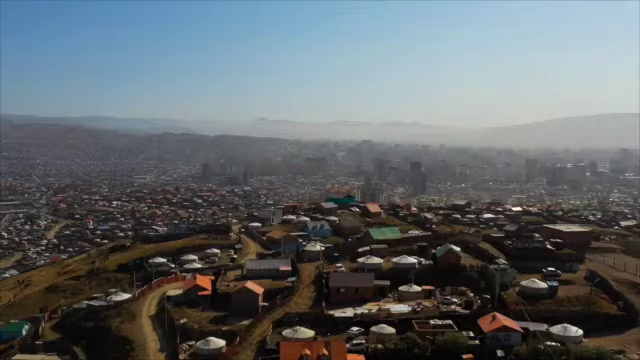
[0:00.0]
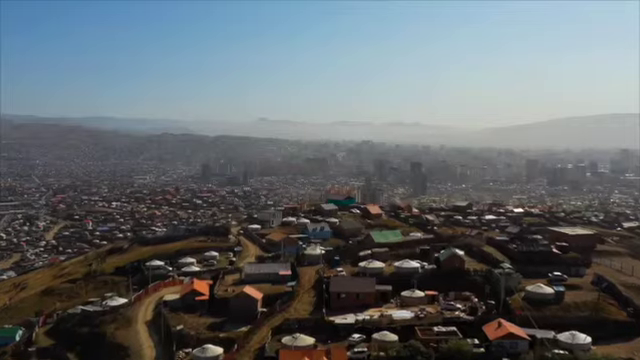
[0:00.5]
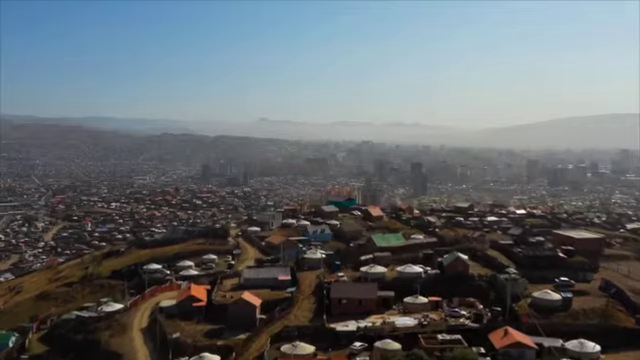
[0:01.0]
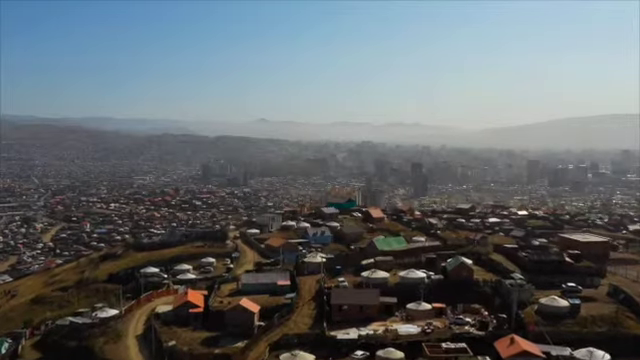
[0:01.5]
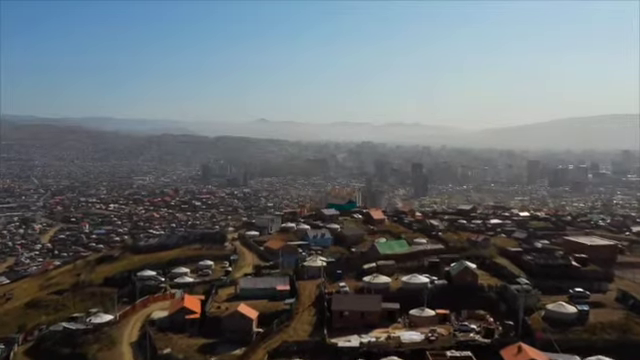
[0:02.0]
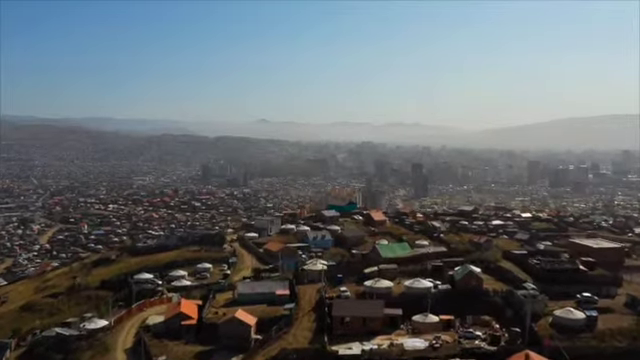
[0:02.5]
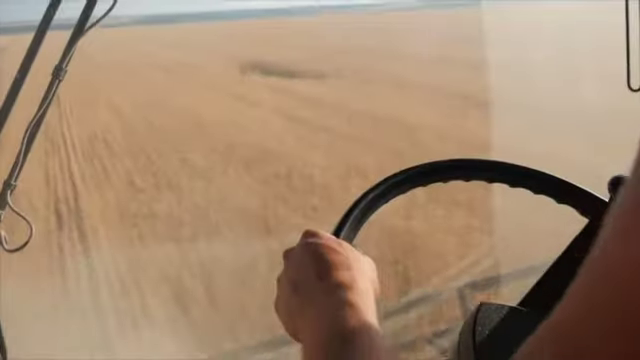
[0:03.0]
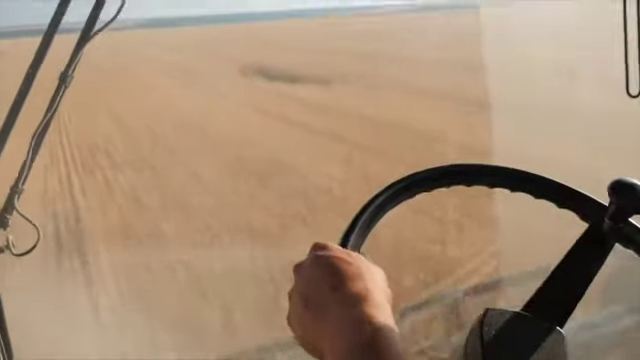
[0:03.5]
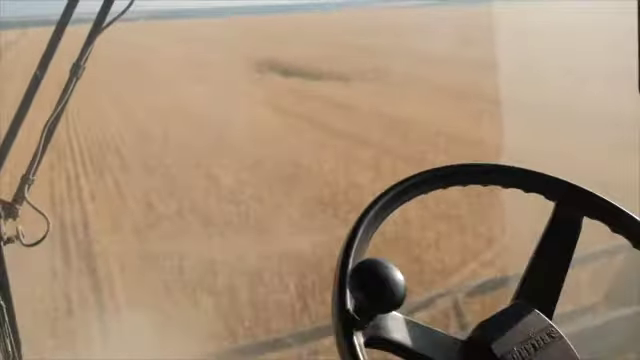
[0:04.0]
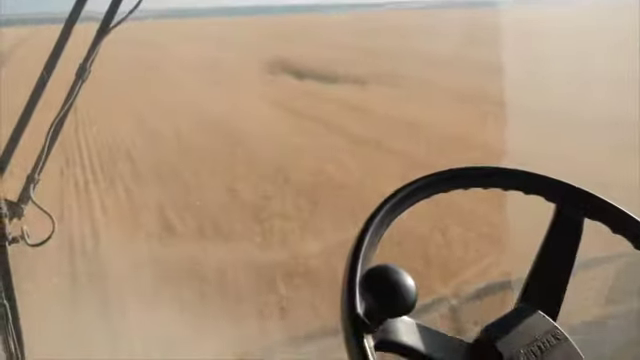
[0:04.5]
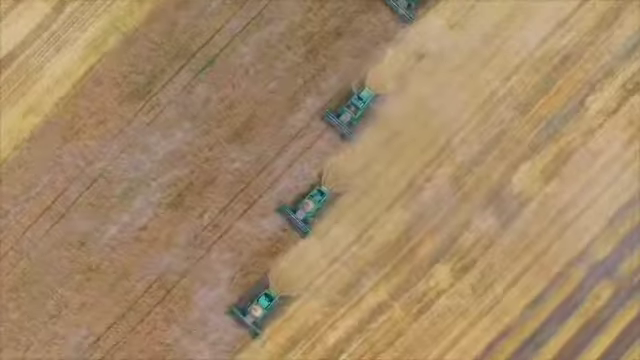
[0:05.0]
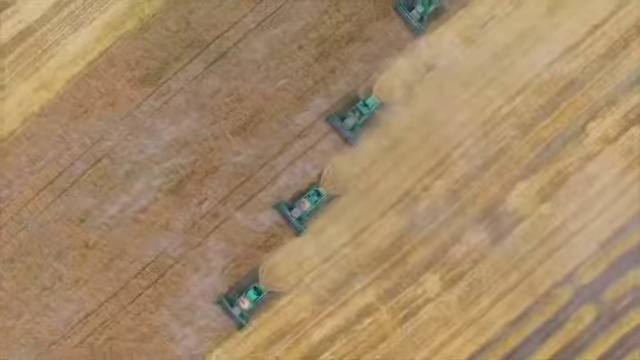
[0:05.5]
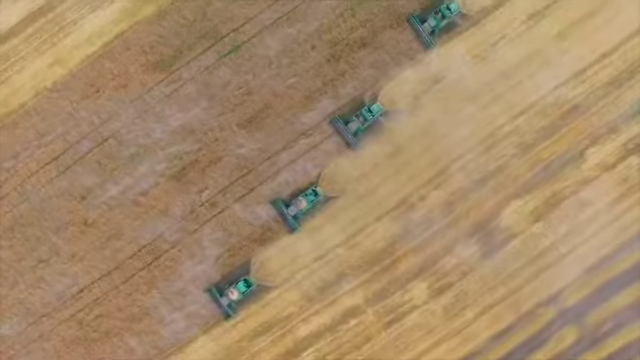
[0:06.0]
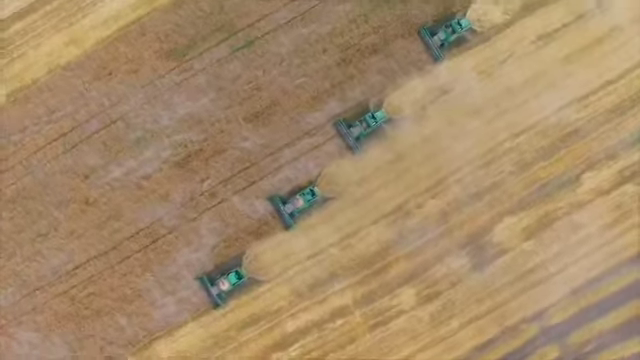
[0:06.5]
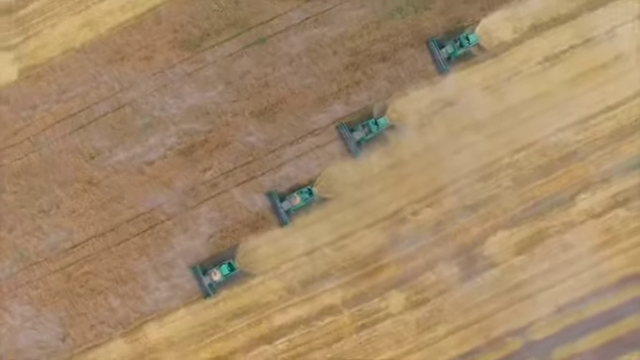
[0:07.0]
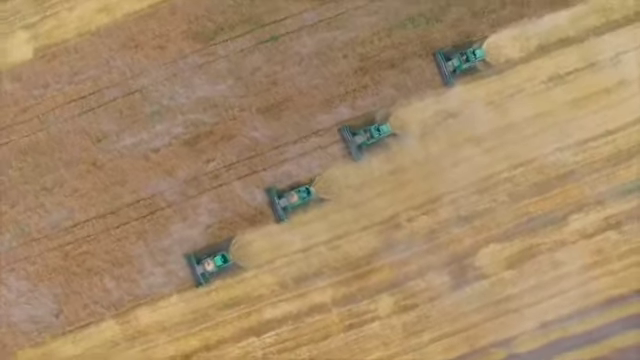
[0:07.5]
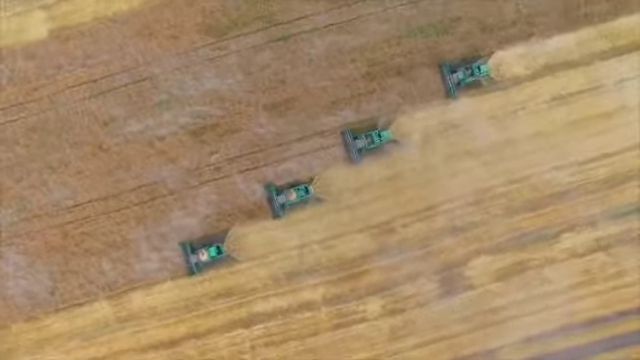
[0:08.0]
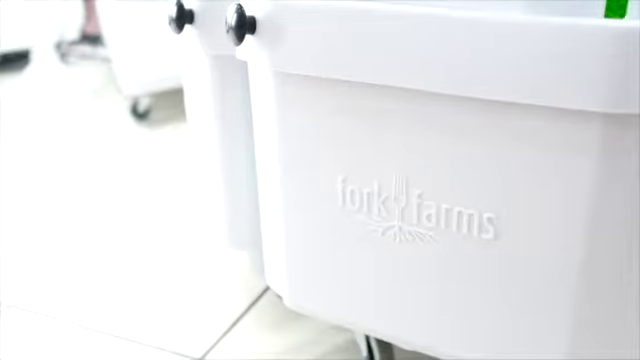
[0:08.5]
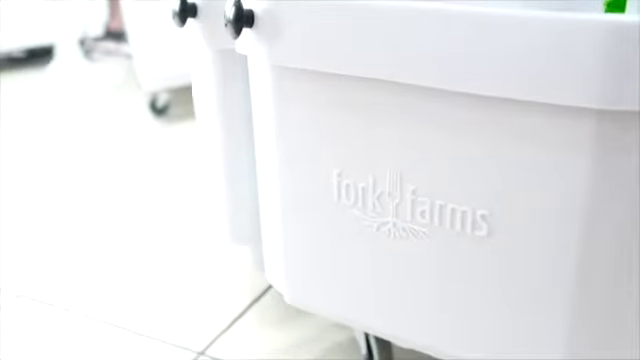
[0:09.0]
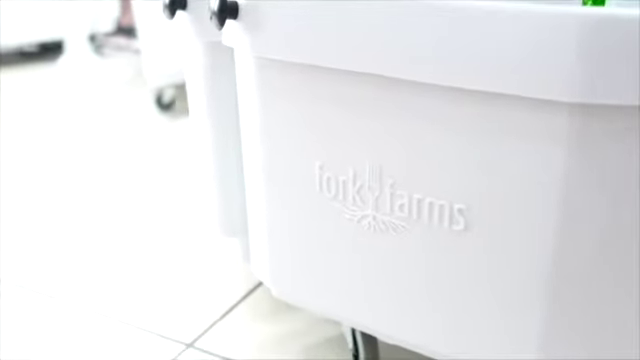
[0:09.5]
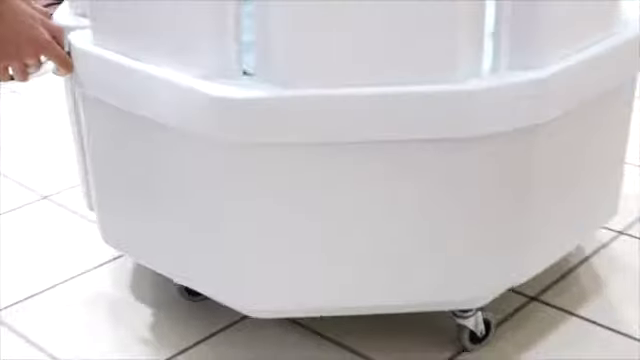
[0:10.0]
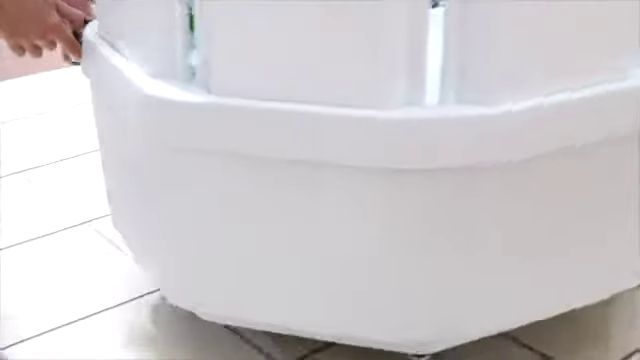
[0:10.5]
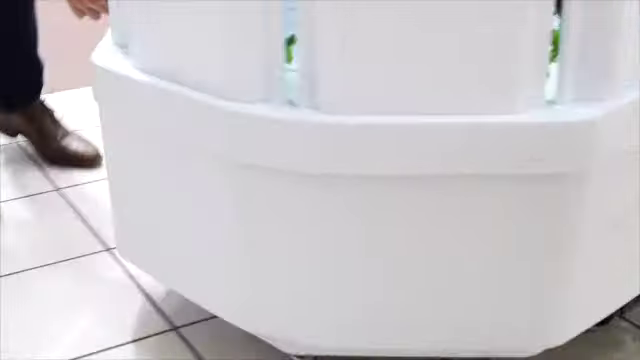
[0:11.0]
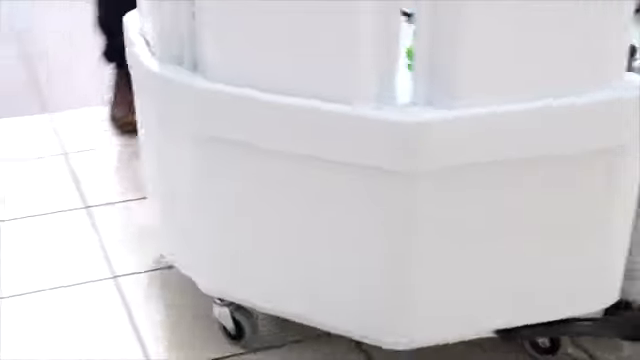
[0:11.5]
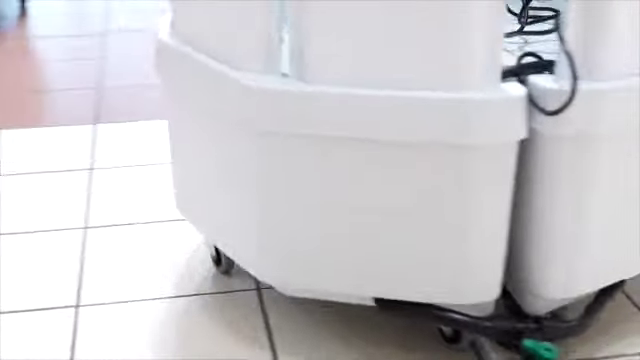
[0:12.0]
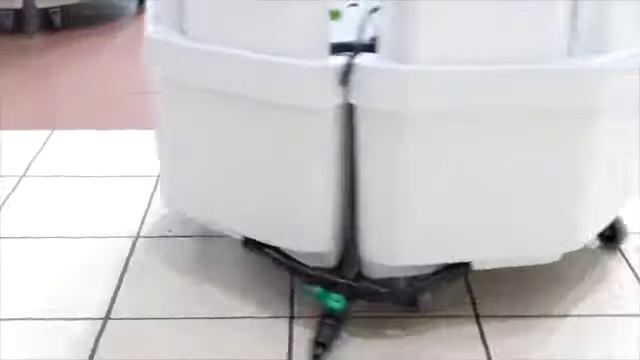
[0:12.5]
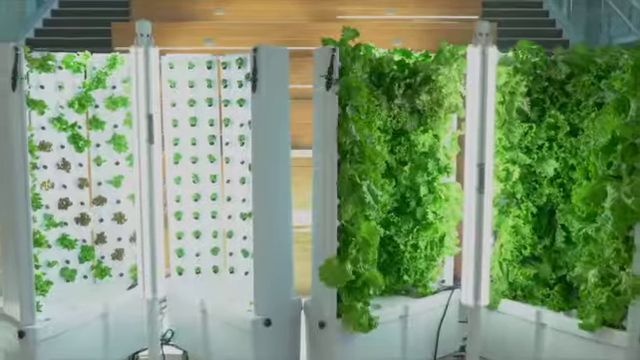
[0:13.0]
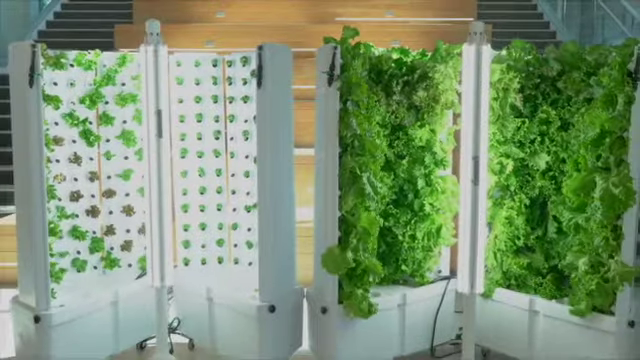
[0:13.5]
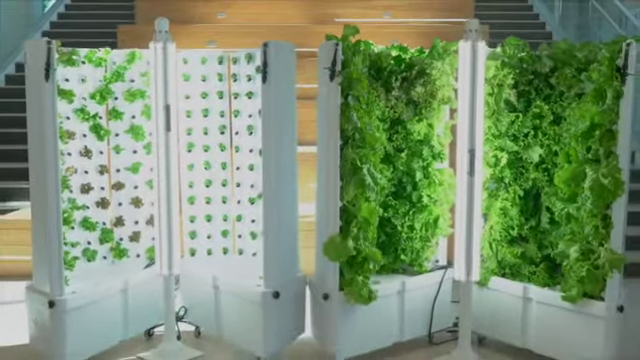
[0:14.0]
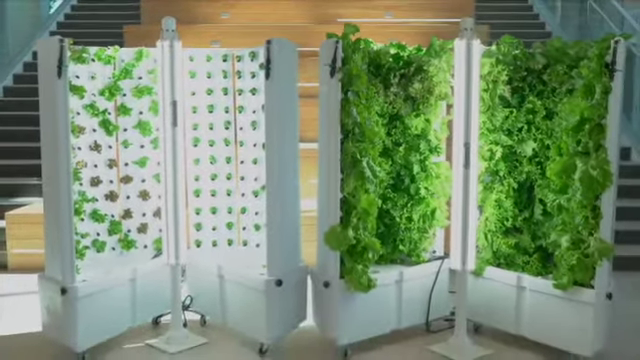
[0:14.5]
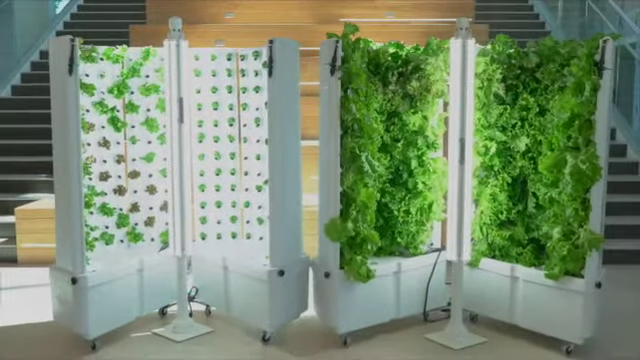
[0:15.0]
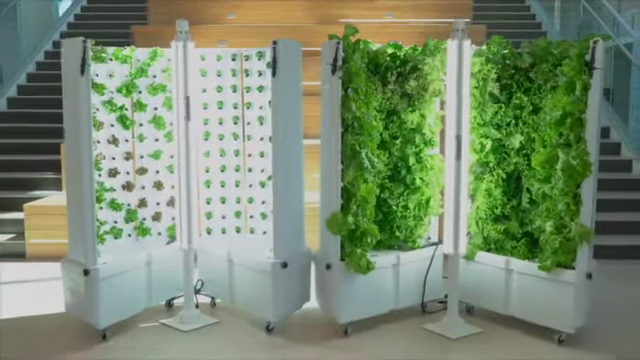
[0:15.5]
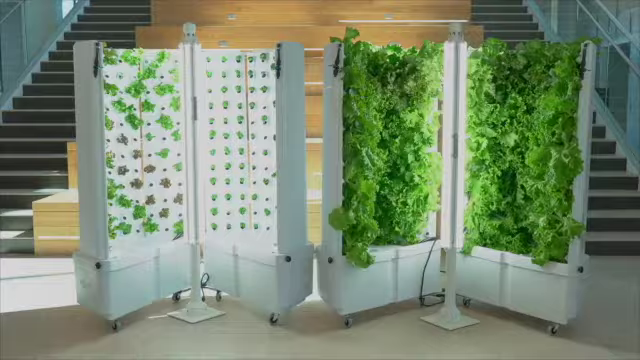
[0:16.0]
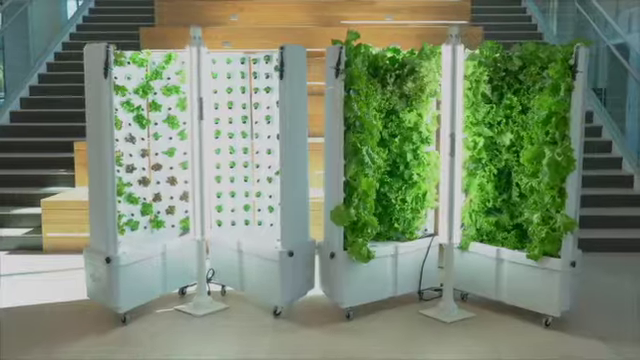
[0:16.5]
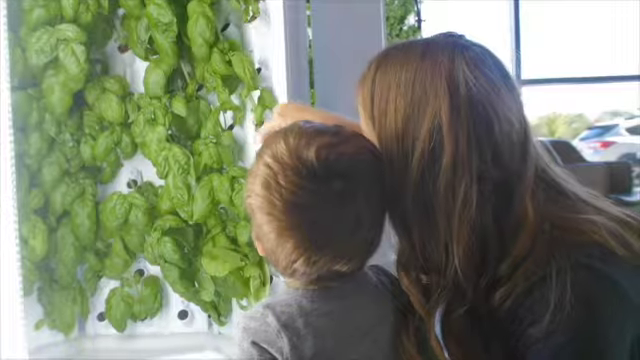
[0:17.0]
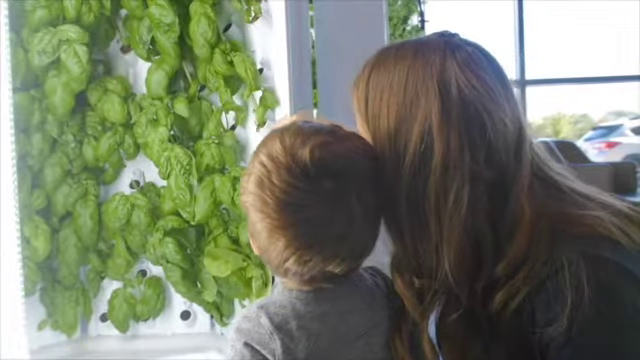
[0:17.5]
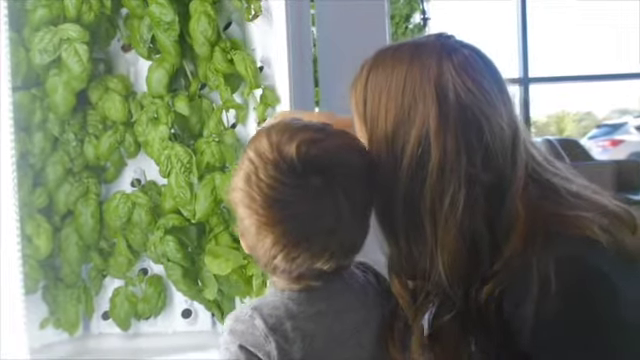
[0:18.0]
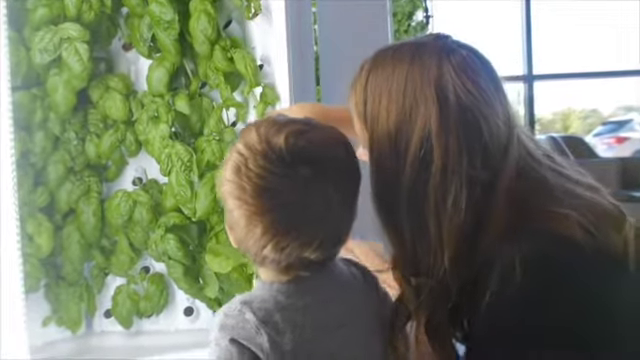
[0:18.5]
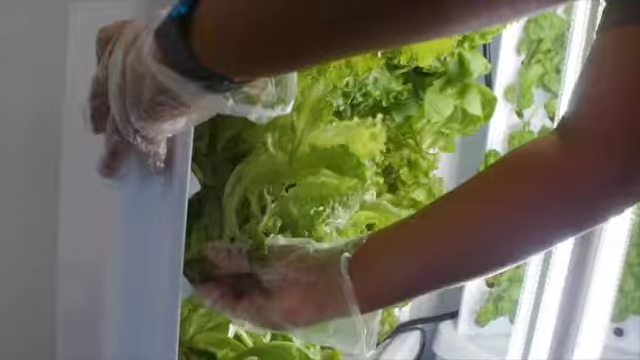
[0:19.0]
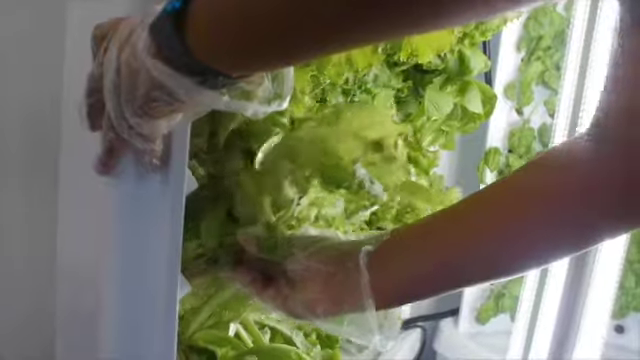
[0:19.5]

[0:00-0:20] The video opens with a high-altitude view of a very big city made up of roadways, trees and houses, with mountains visible in the far distance. Next, a person rides inside what looks to be a tractor. A still picture follows of several tractors riding alongside each other on a dirt road area. A white container then appears with "fork farms" written on it, with a fork between the two words, and a person rolls out one of these containers. Four tall white objects follow, with several grass or leafy objects on them. The video is in a rectangular frame, and most of the pictures and footage have a good amount of natural light, so everything is clear and visible.